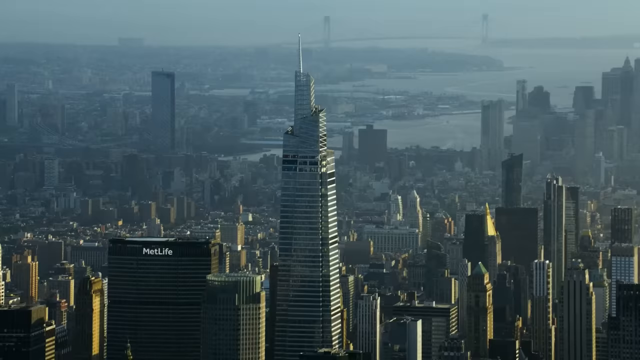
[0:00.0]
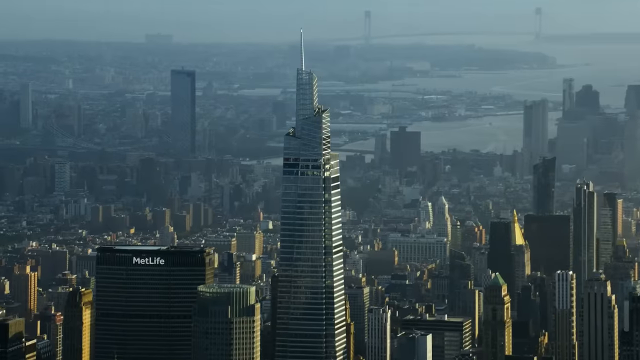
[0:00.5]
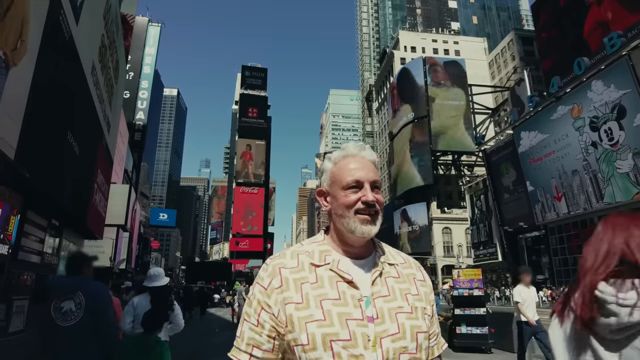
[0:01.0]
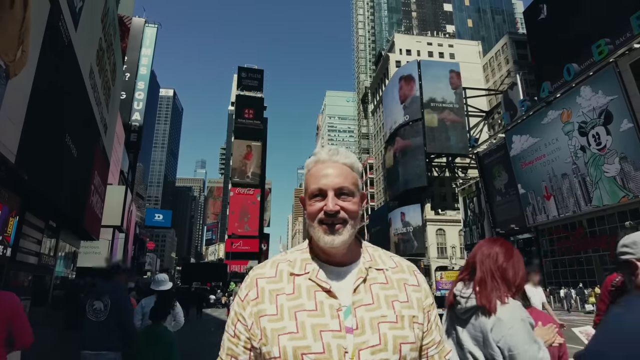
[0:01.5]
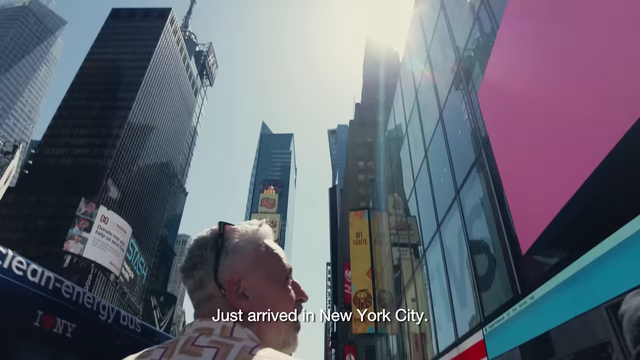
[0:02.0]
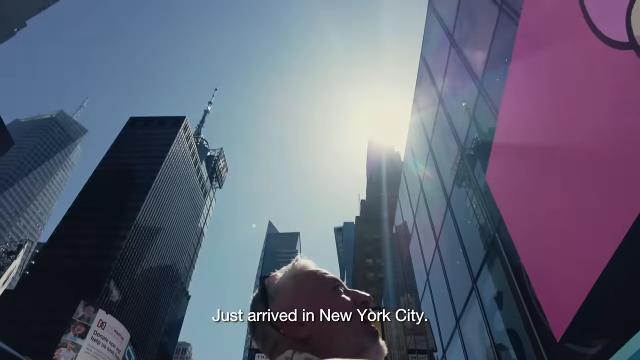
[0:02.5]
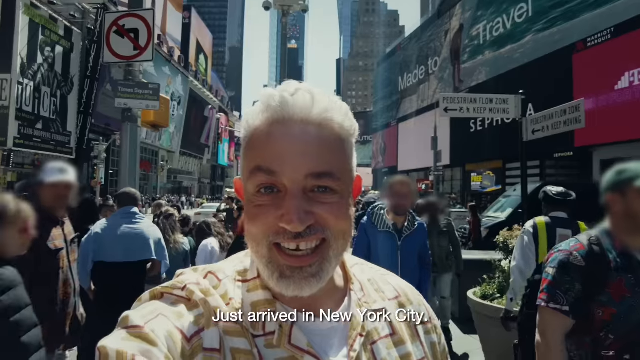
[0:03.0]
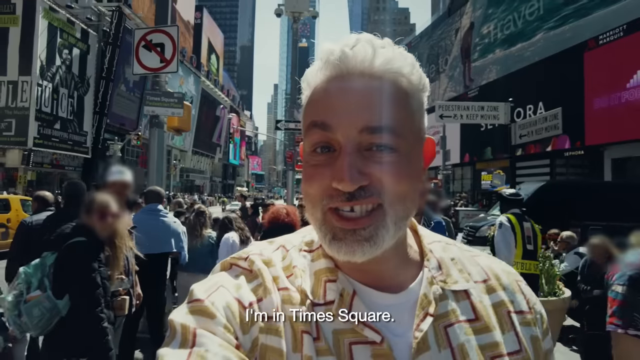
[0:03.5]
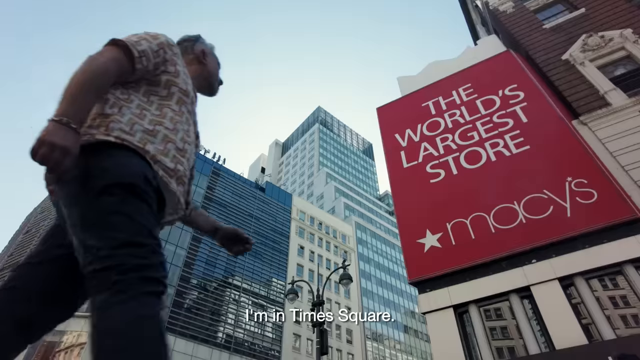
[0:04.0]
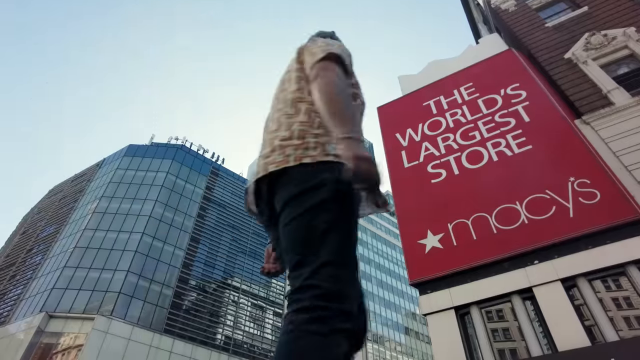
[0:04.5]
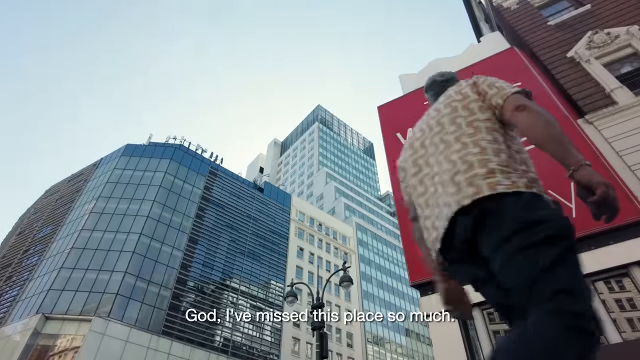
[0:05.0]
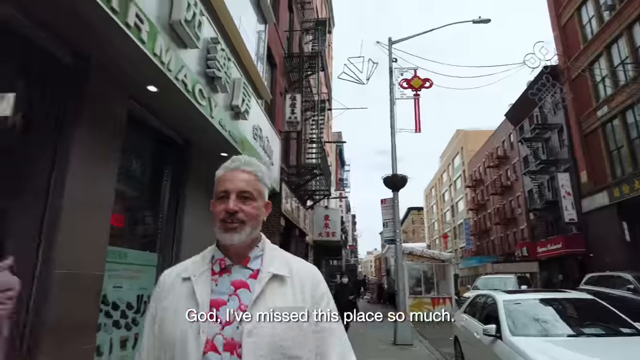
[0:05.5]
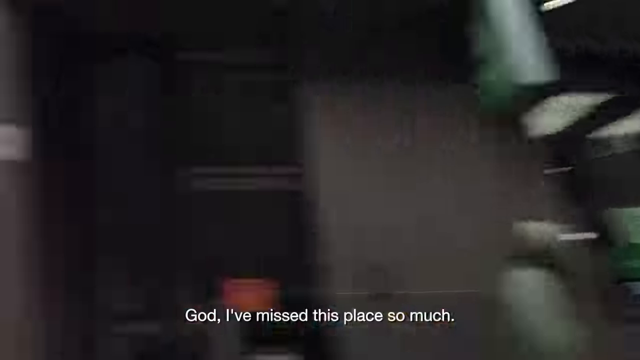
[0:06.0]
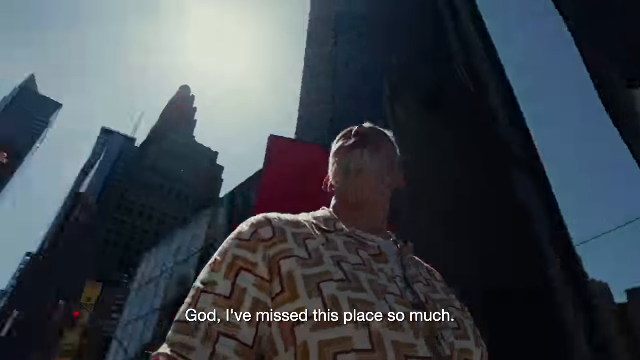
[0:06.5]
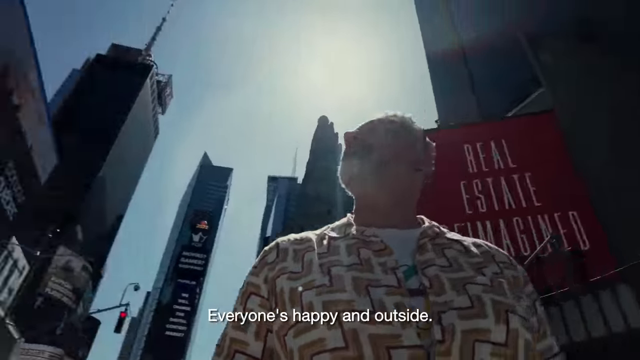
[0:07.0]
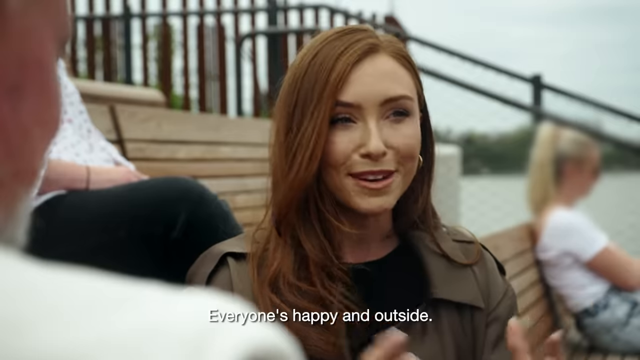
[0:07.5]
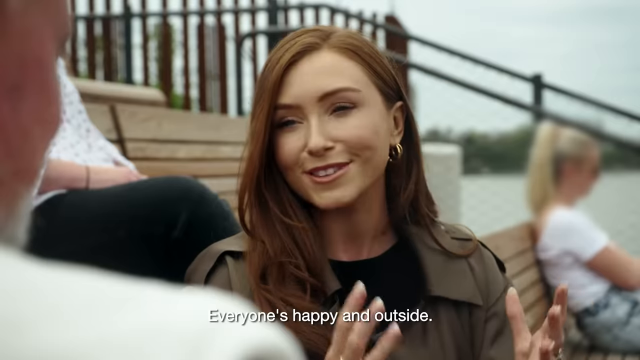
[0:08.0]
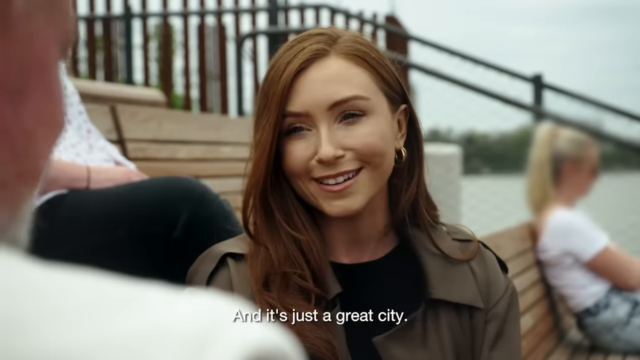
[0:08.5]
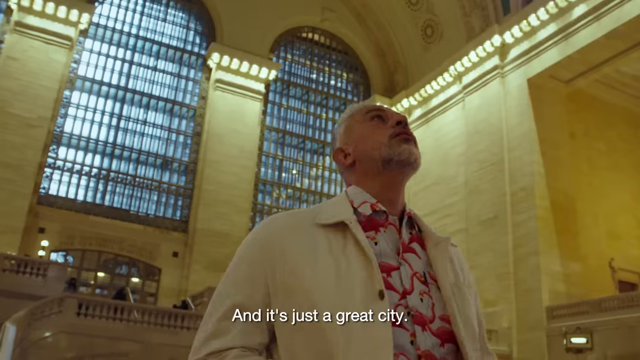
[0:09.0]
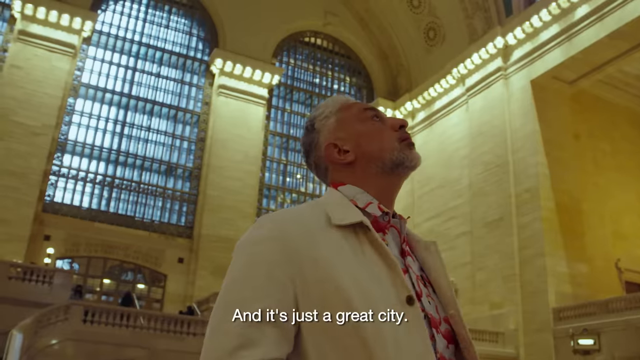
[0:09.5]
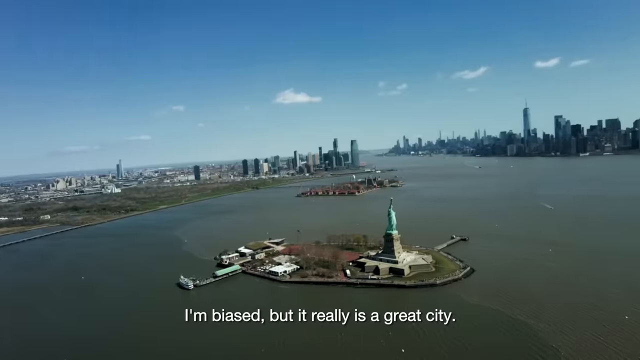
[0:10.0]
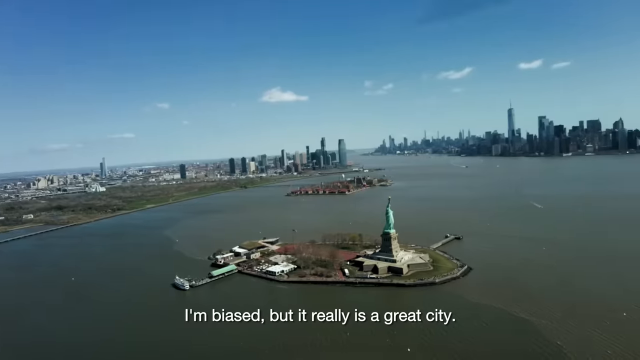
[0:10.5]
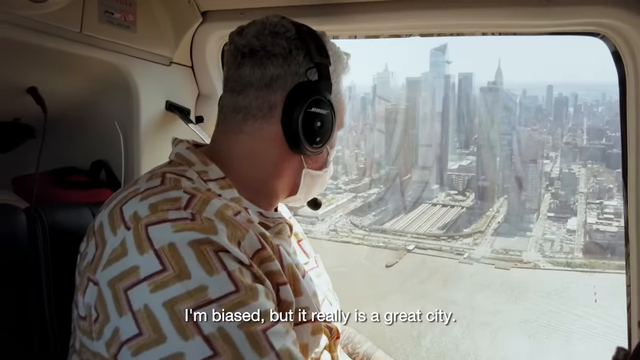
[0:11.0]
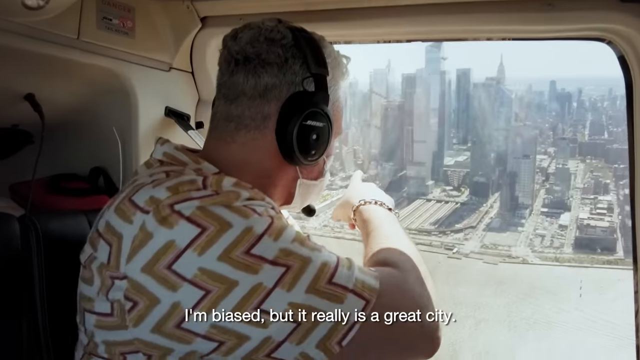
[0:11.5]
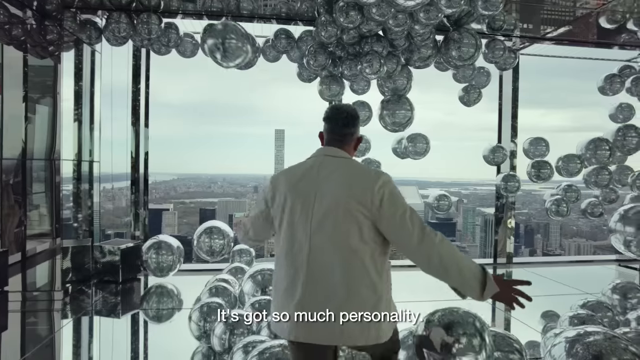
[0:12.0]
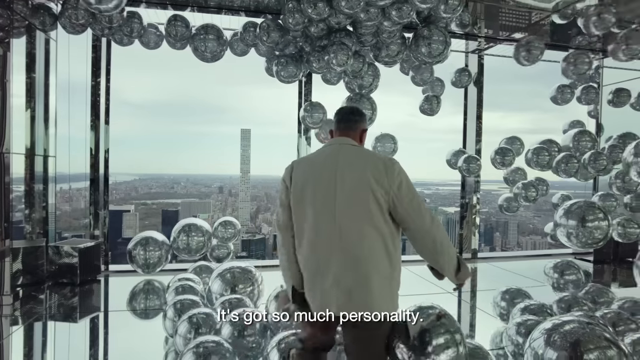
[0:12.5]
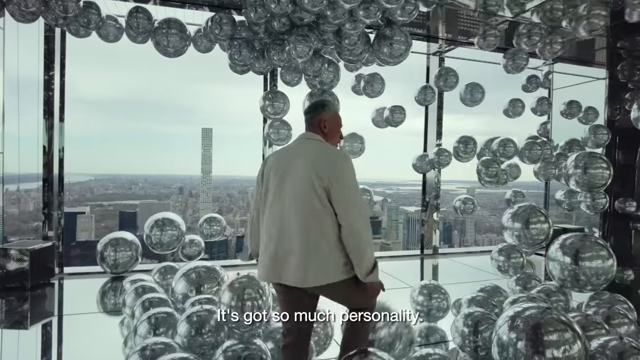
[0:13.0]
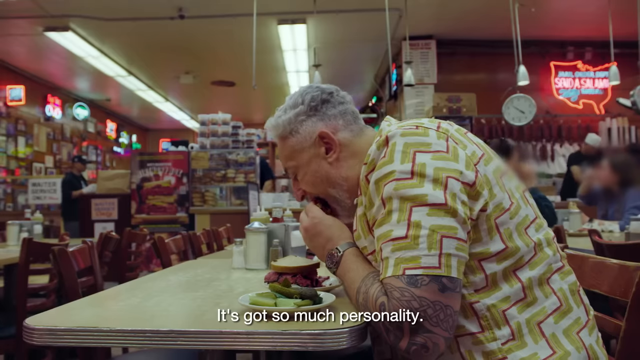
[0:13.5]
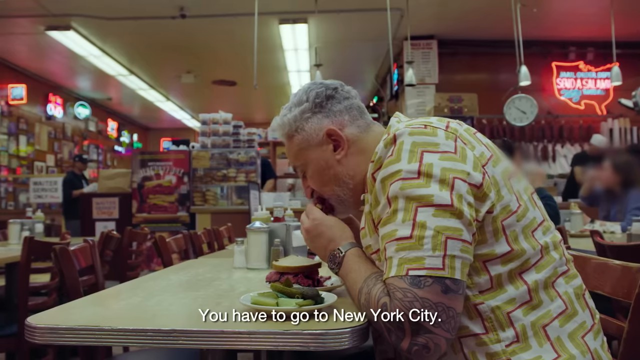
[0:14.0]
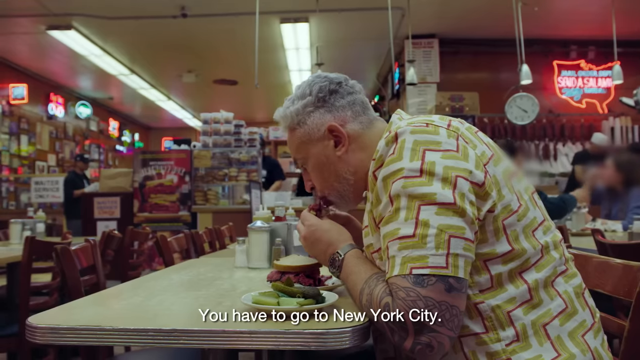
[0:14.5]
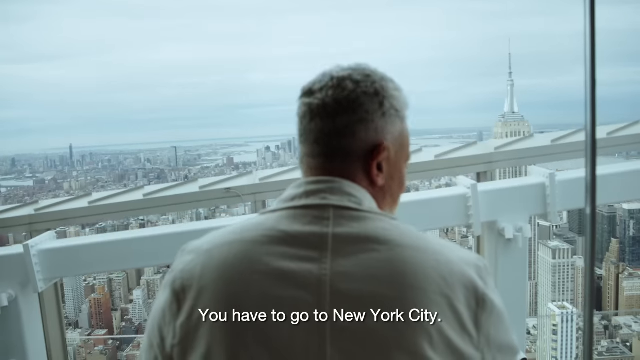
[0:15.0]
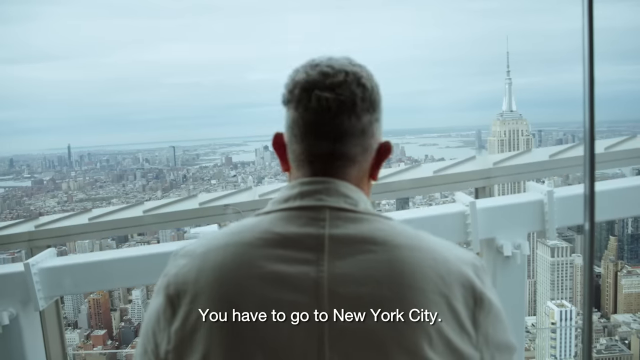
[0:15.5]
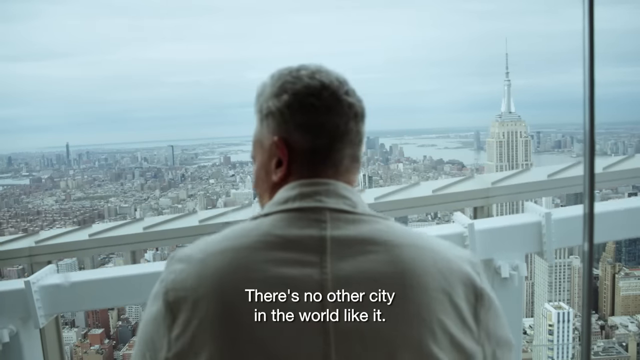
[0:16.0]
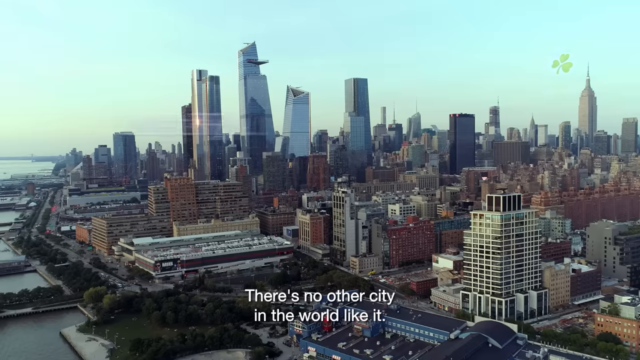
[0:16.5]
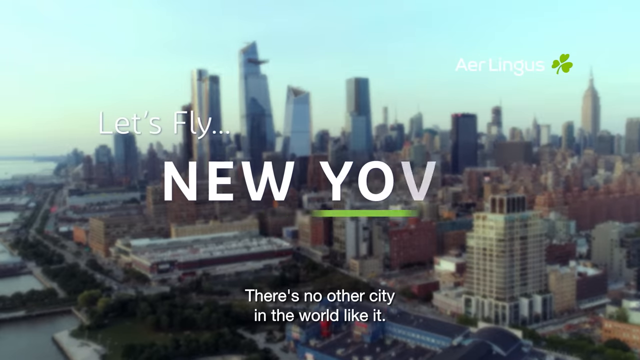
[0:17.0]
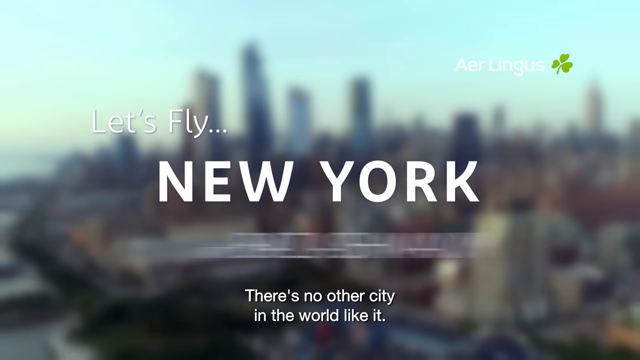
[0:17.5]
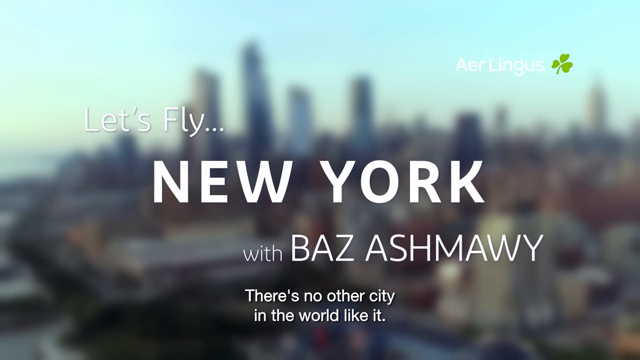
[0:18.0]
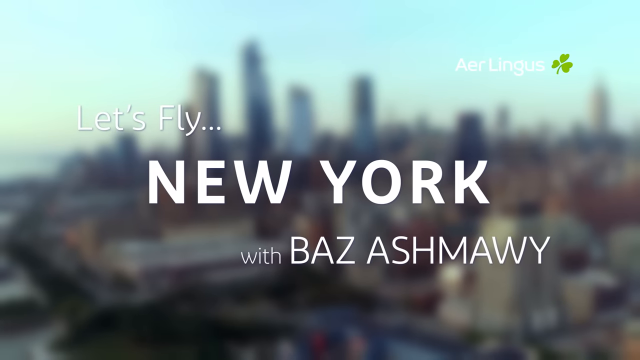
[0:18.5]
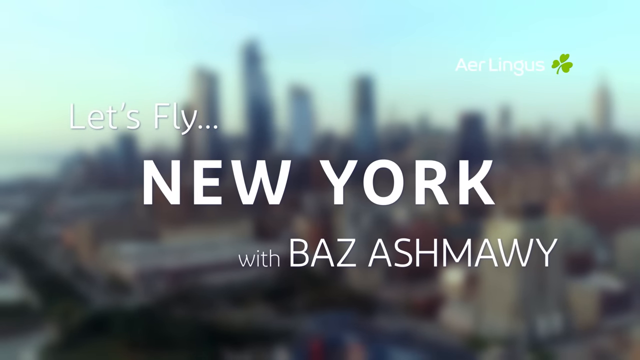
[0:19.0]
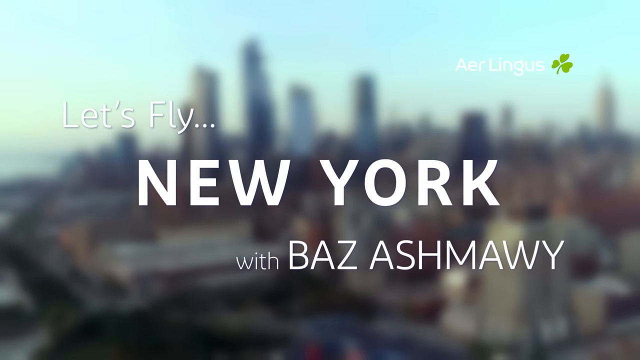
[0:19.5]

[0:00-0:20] The video opens with a view of a city with several hundred high-rise buildings; the top of one building bears its name, "MetLife." The scene changes to a man walking through the city with lots of people walking around him. He wears a shirt in a combination of red, cream and beige colors over a white inner shirt, and appears to be very cheerful. His hair is white, and so is his beard. There are some billboards all around him. On-screen text says he has just arrived in New York City, and a caption reads "I'm in Times Square, God I've missed this place so much." One of the boards reads "THE WORLD'S LARGEST STORE Macy's." The man pans around the environment. The video then changes to him talking to a woman who wears earrings and a brown jacket with a black inner shirt; she appears to be very cheerful. Blurred in the background are two other people: a woman with a ponytail wearing a white top, and a man in a white shirt and black pants with his leg crossed. The caption reads "Everyone's happy and outside, and it's just a great city, I'm biased but it really is a great city, it's got so much personality, you have to go to New York City, there's no other city in the world like it. let's fly New York with Baz Ashmawy."